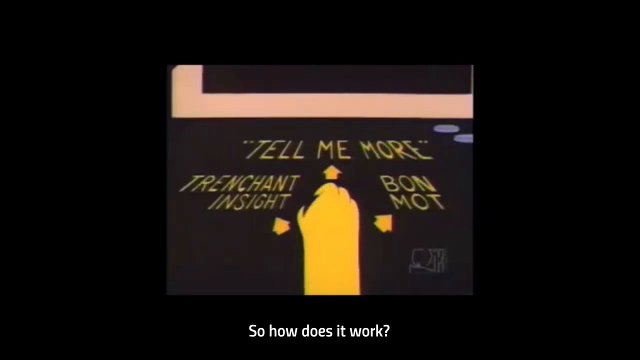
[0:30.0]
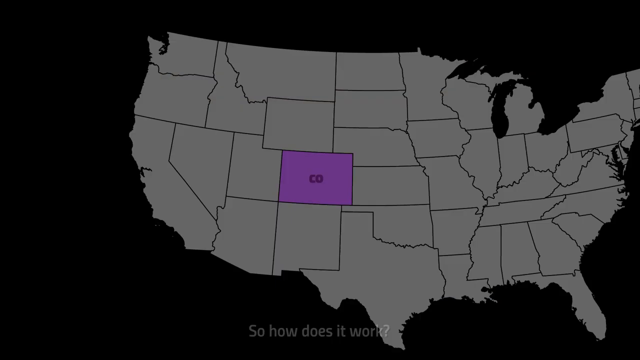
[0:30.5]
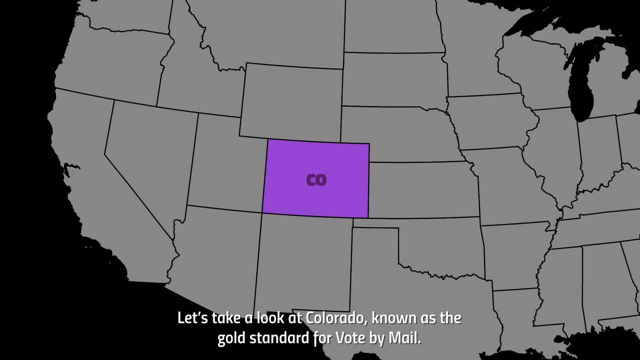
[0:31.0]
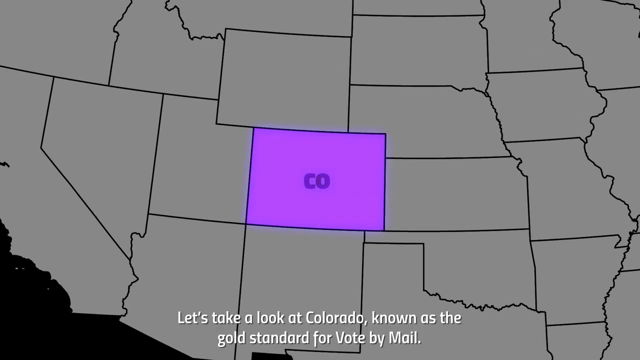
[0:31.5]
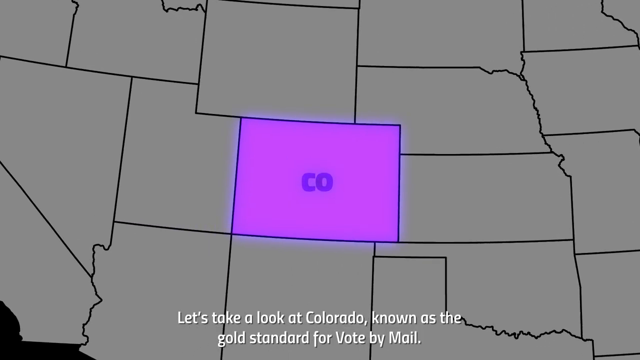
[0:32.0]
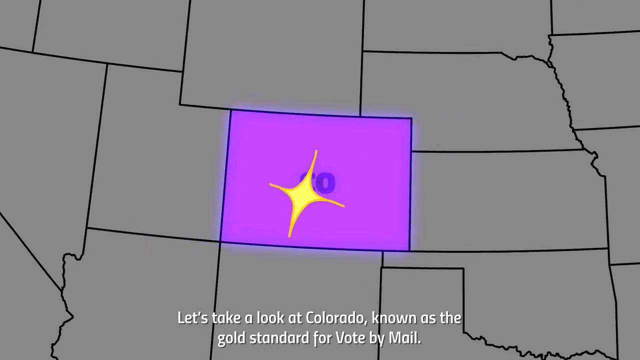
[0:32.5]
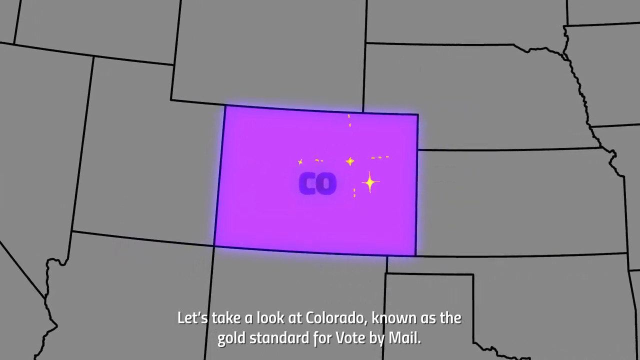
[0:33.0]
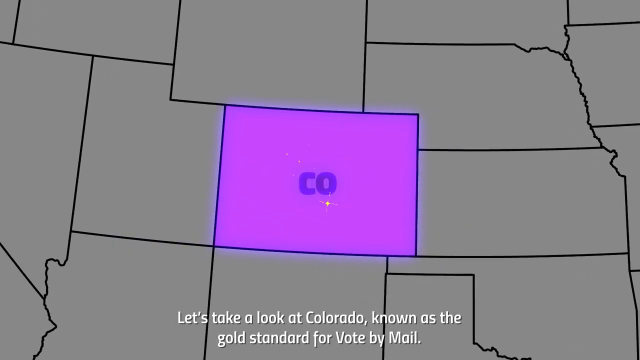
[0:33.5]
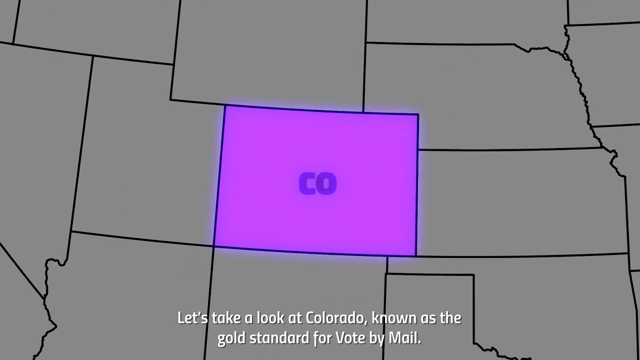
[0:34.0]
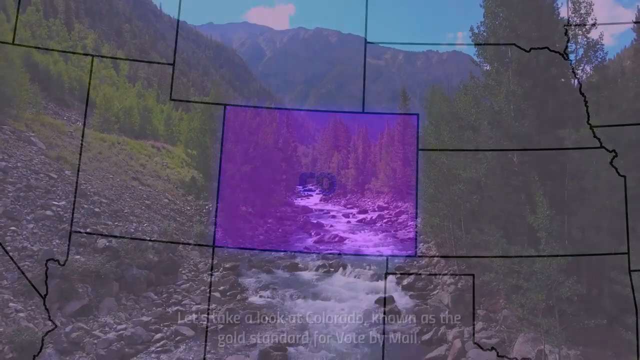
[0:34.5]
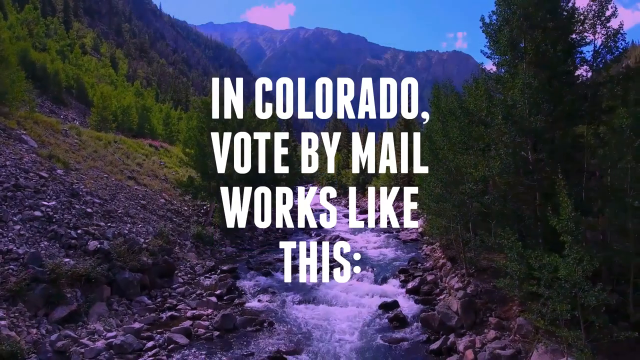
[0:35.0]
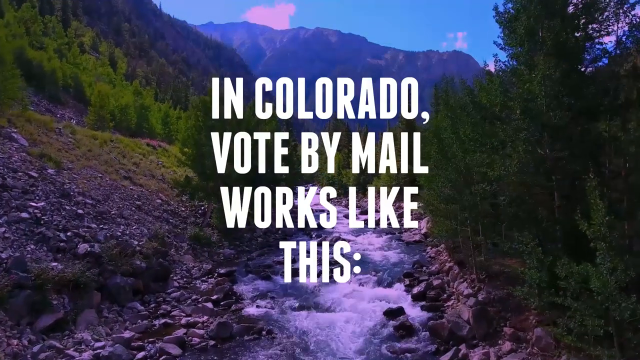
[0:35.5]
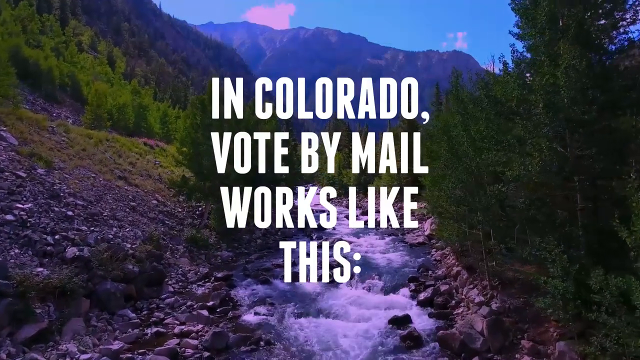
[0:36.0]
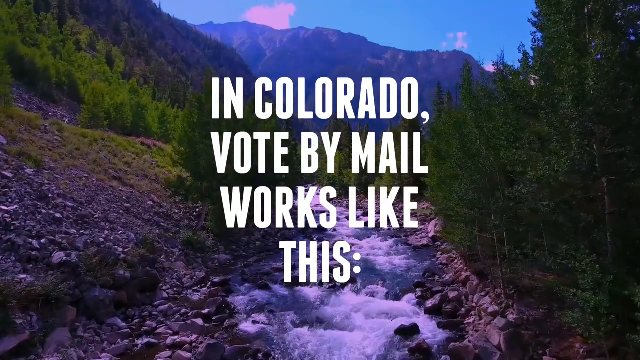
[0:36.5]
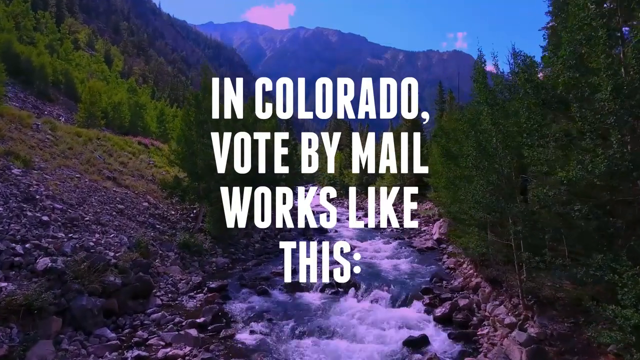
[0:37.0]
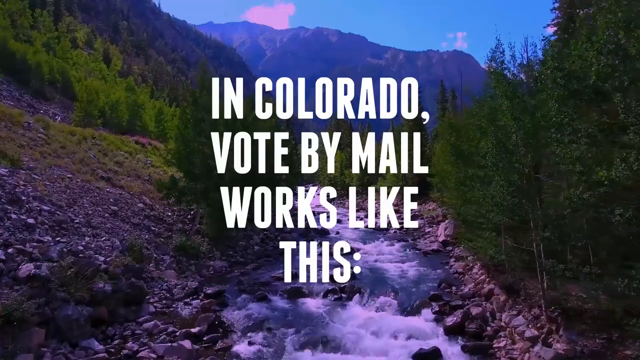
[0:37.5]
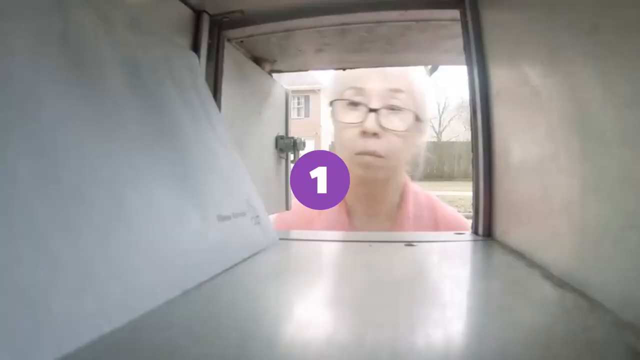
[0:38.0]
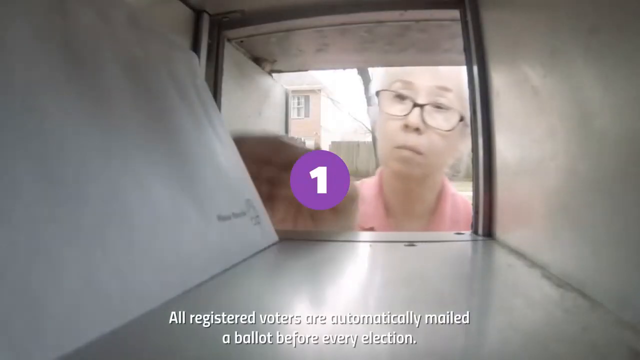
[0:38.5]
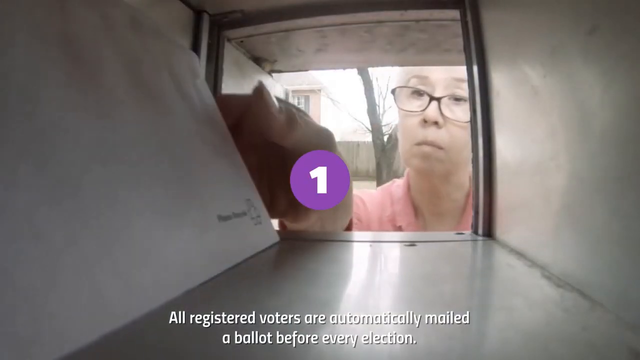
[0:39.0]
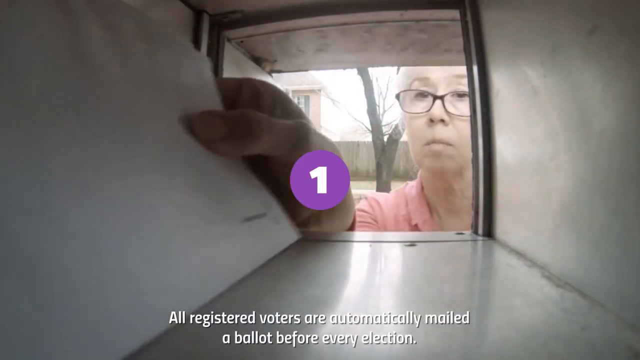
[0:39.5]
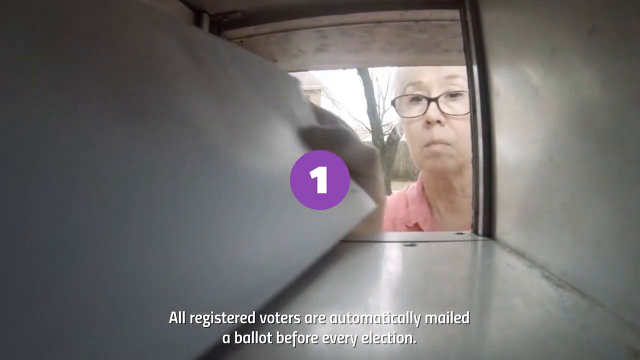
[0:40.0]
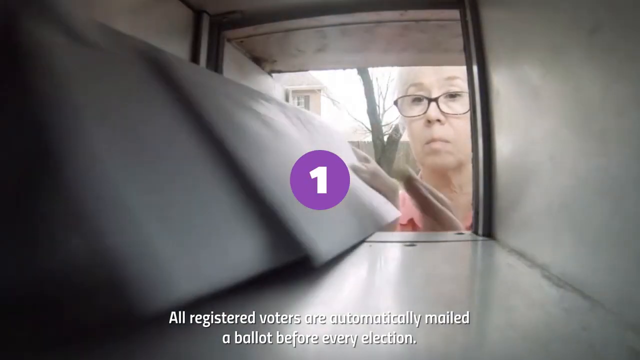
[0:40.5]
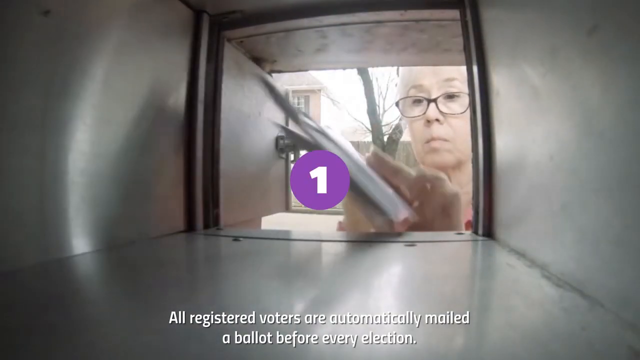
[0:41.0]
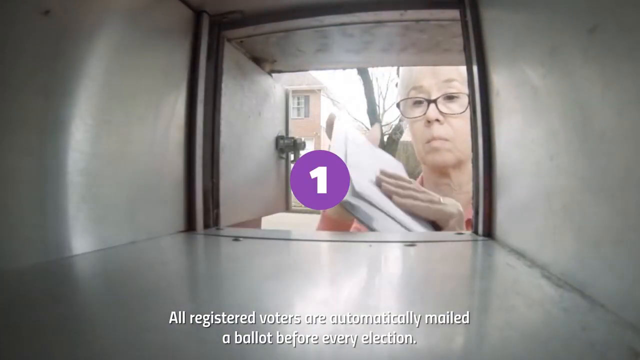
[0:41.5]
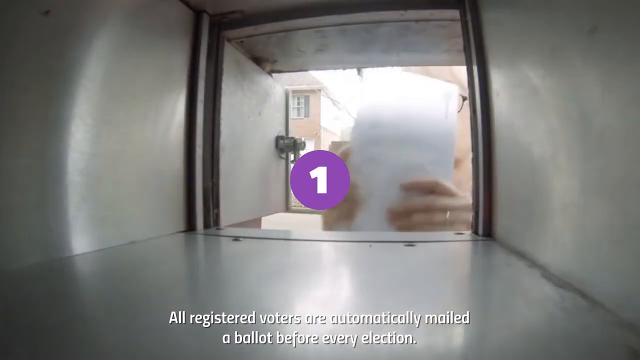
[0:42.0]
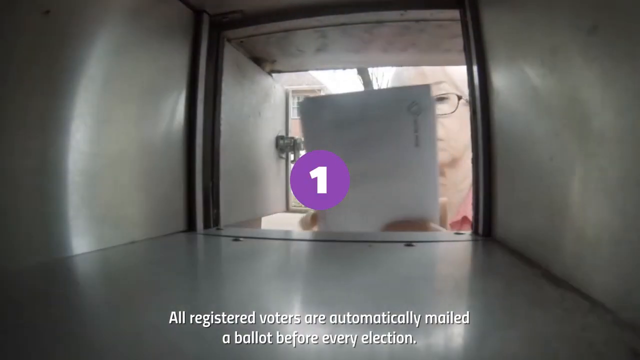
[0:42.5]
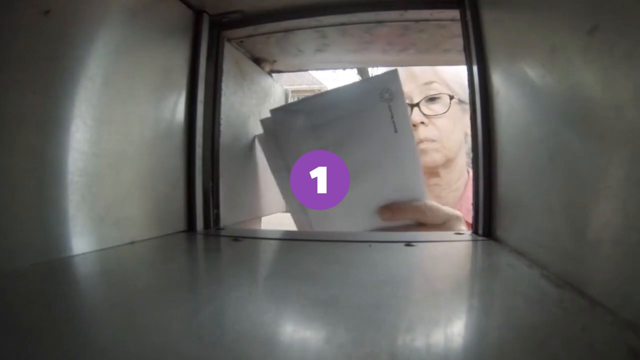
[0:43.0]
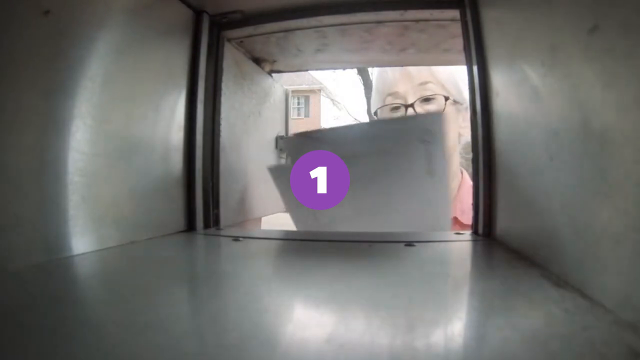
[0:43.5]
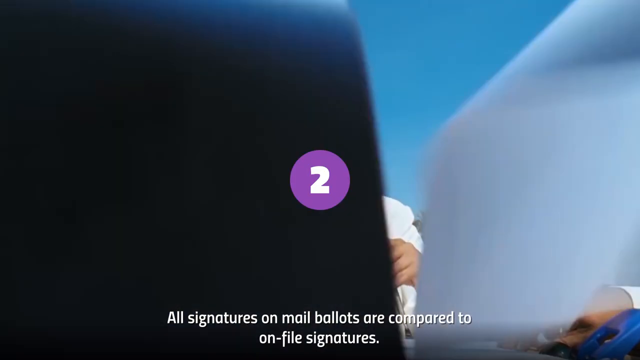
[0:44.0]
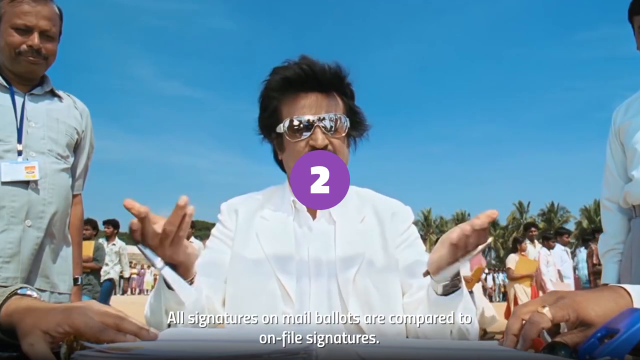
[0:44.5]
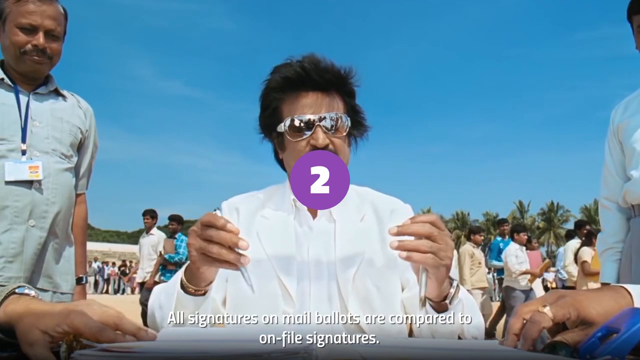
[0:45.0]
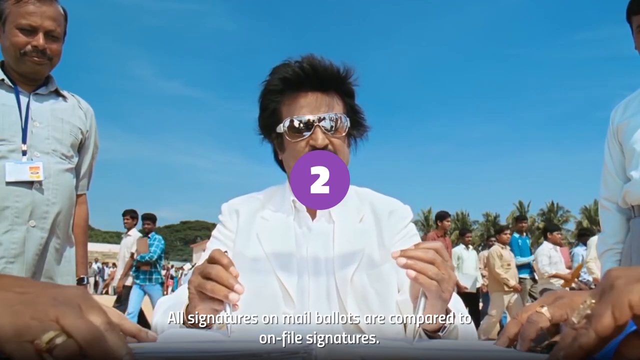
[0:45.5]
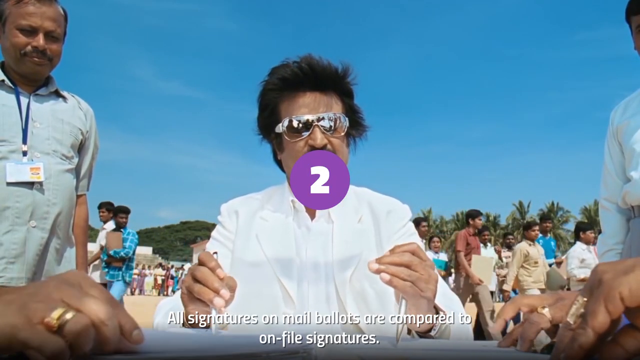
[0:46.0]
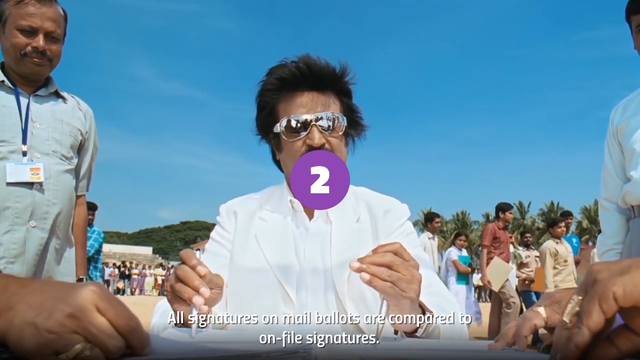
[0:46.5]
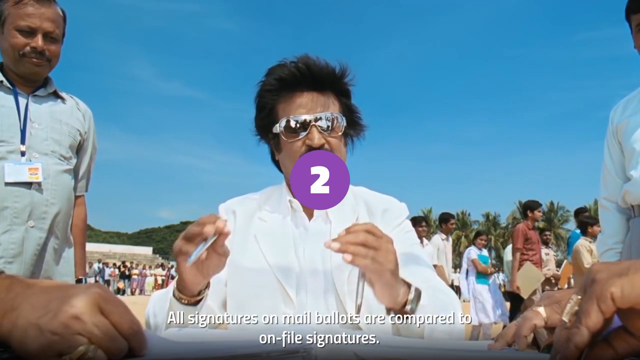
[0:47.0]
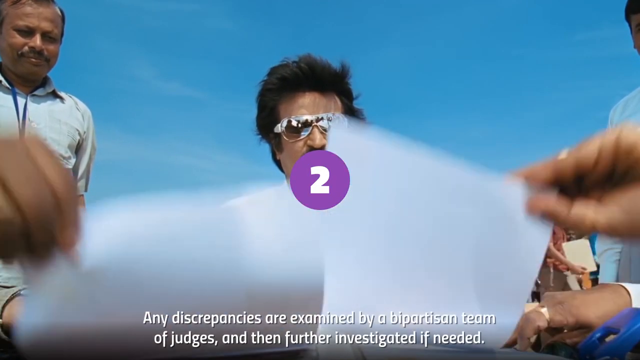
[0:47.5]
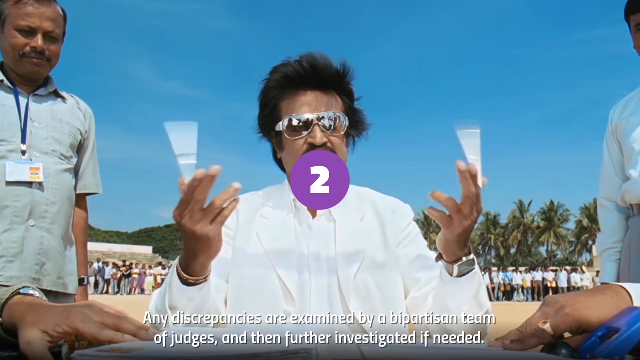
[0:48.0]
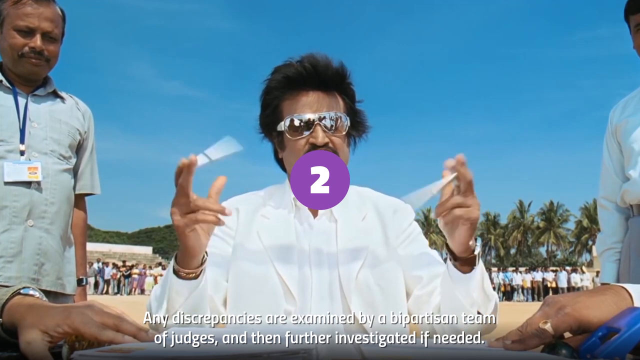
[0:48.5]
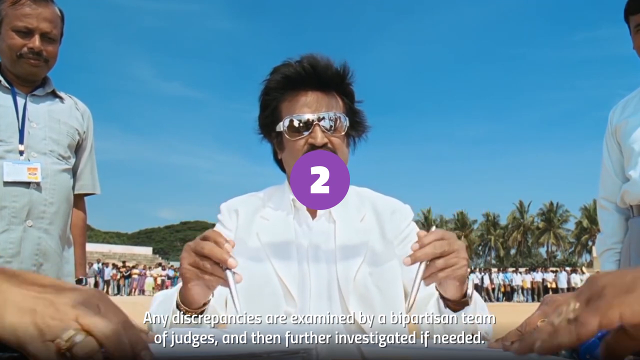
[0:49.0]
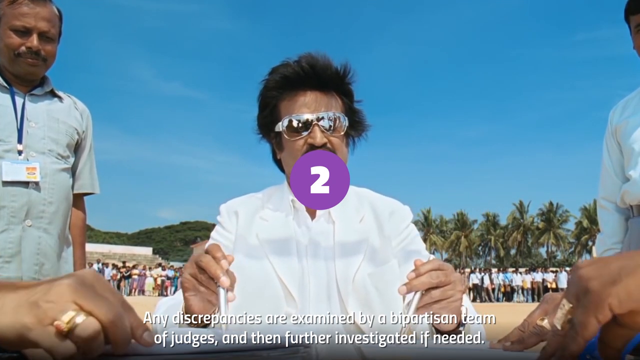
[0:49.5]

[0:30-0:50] Text is displayed in large white lettering over a landscape background of rocky hills, trees and a mountain range, with a blue sky in the distance and water flowing between the trees and the mountains. A man wearing a t-shirt stretches out, and someone in front of a crowd wears a t-shirt and sunglasses.